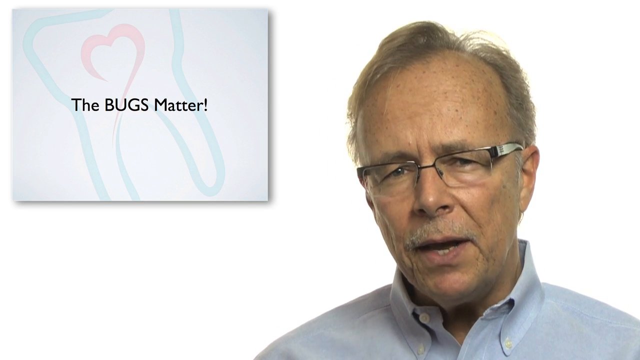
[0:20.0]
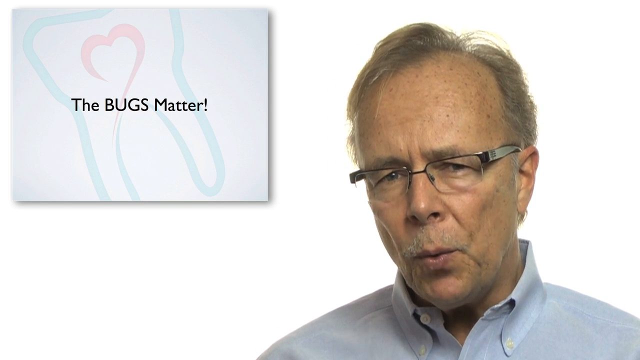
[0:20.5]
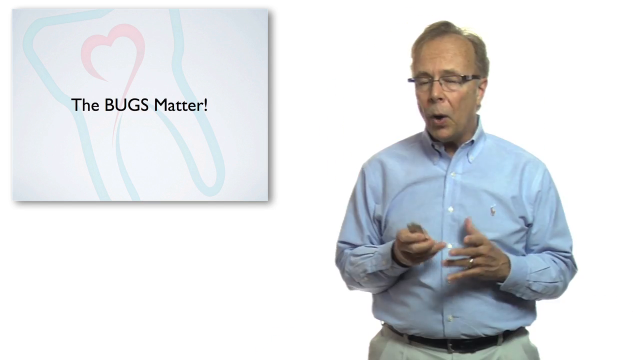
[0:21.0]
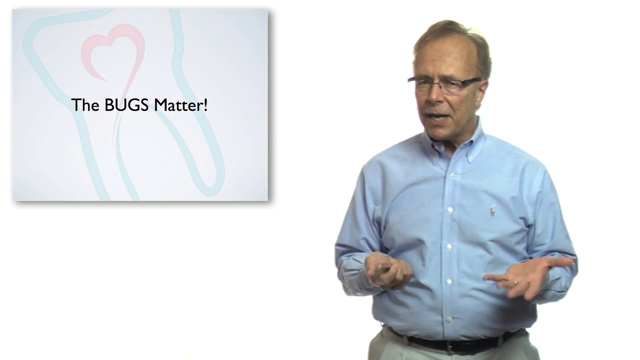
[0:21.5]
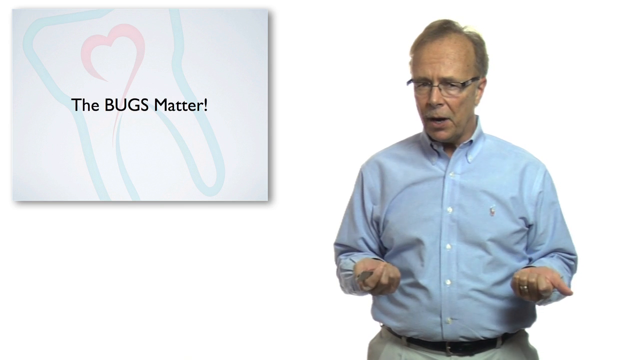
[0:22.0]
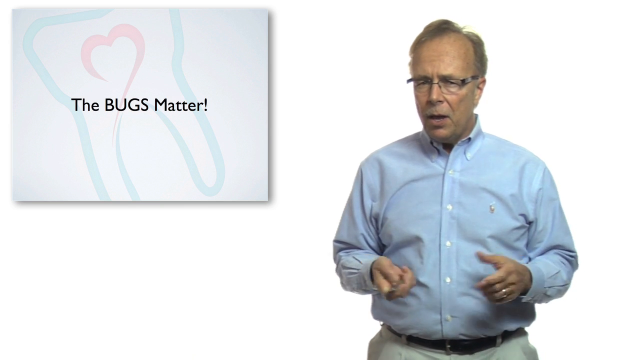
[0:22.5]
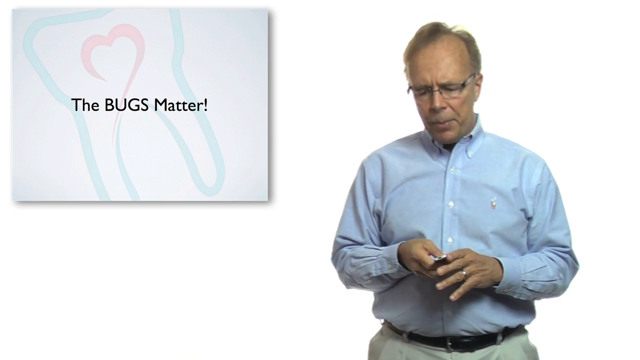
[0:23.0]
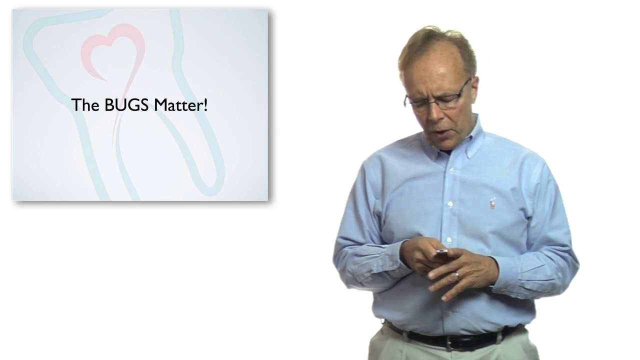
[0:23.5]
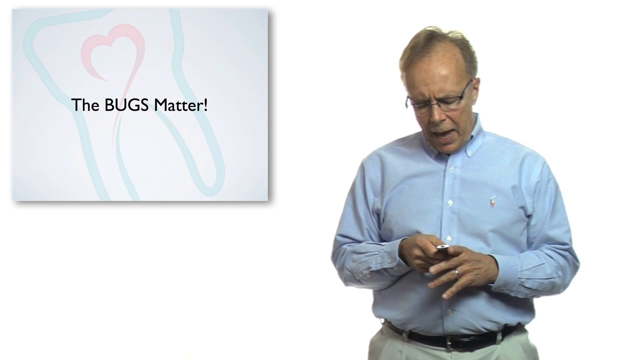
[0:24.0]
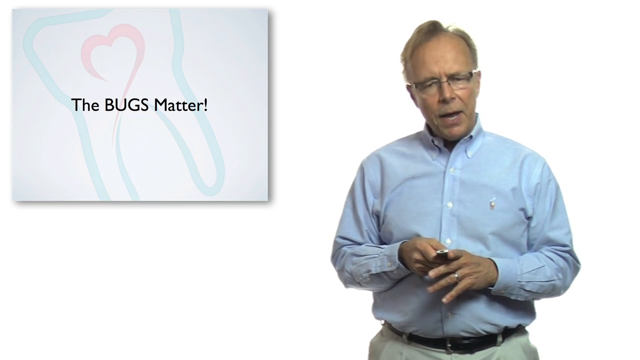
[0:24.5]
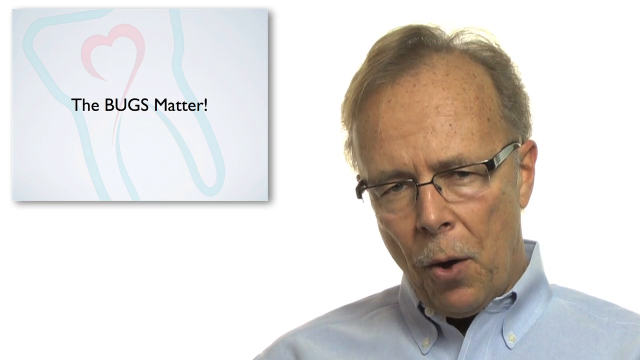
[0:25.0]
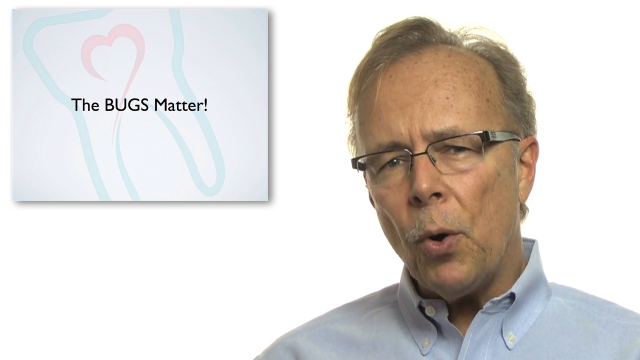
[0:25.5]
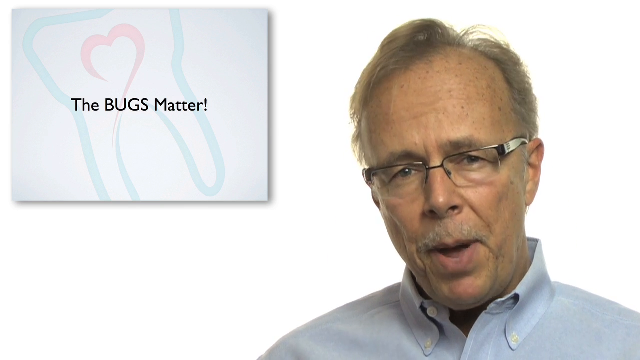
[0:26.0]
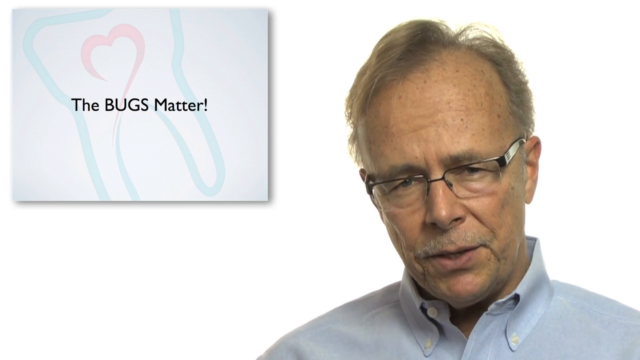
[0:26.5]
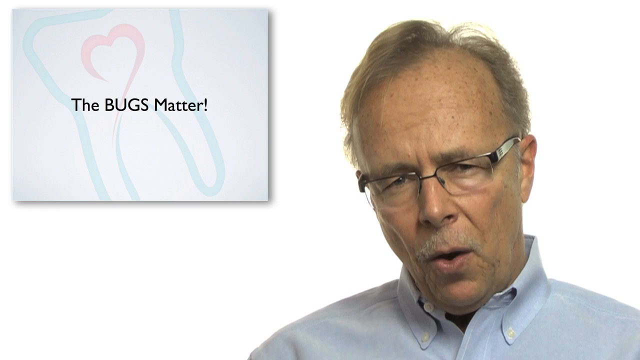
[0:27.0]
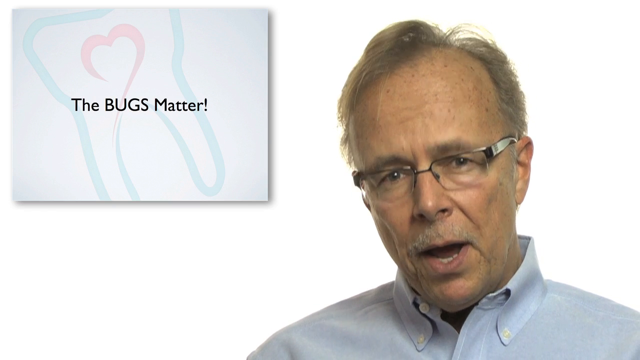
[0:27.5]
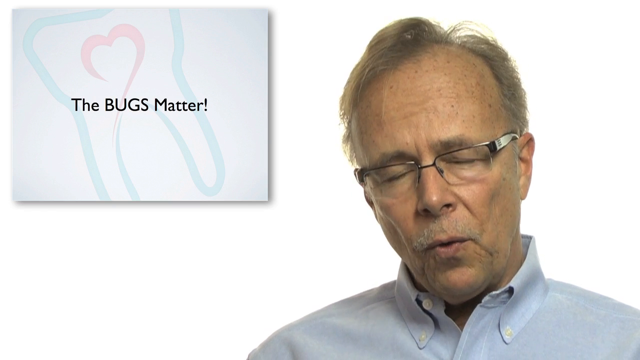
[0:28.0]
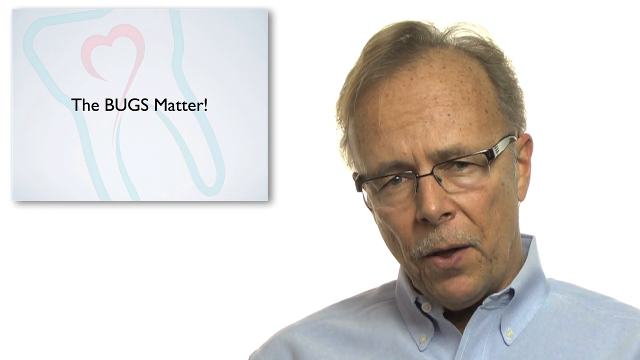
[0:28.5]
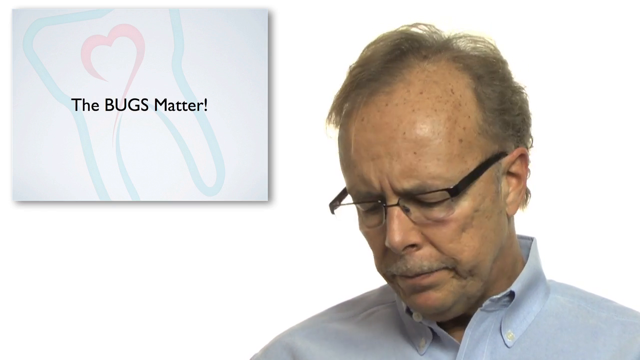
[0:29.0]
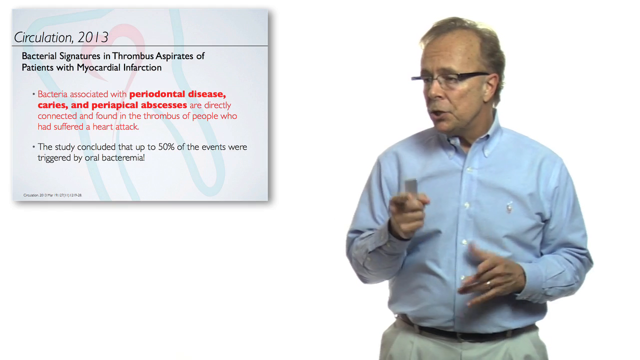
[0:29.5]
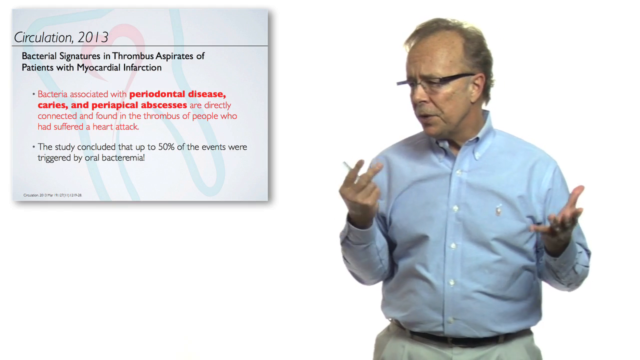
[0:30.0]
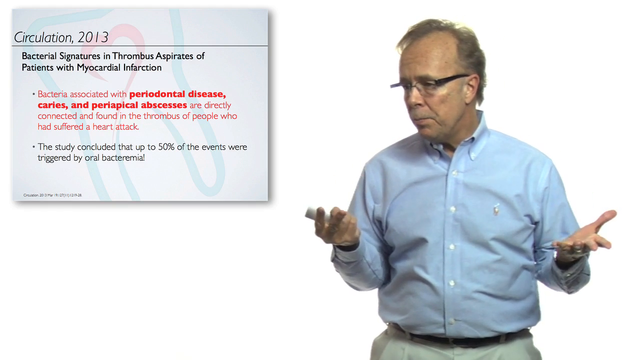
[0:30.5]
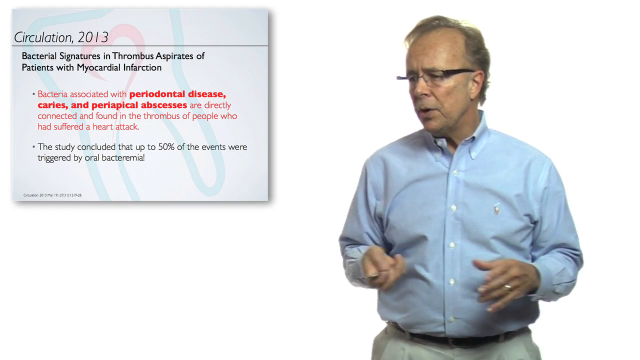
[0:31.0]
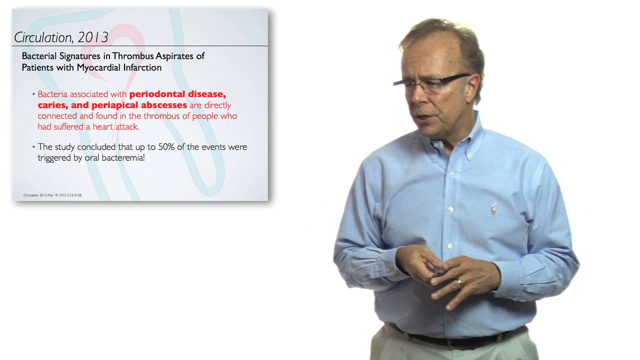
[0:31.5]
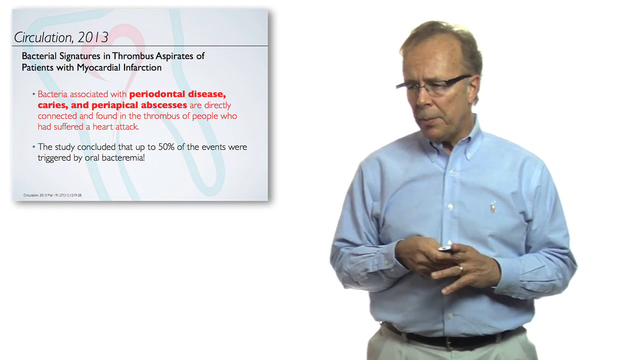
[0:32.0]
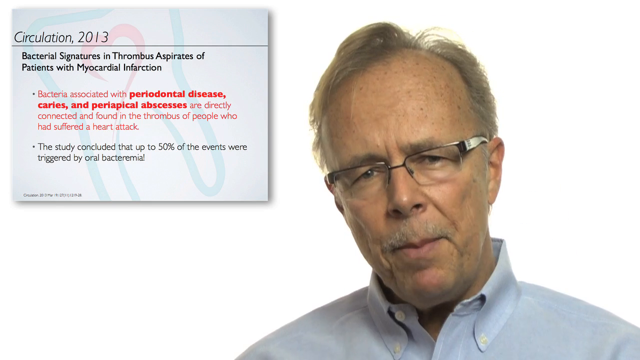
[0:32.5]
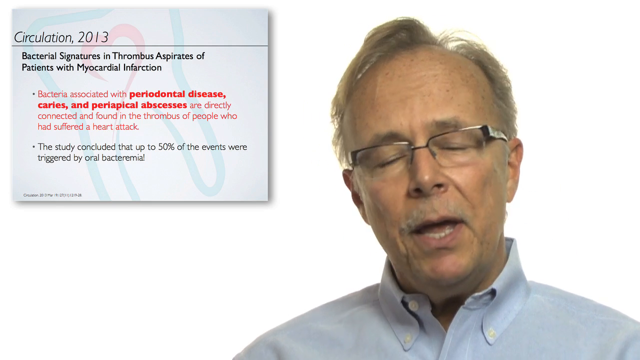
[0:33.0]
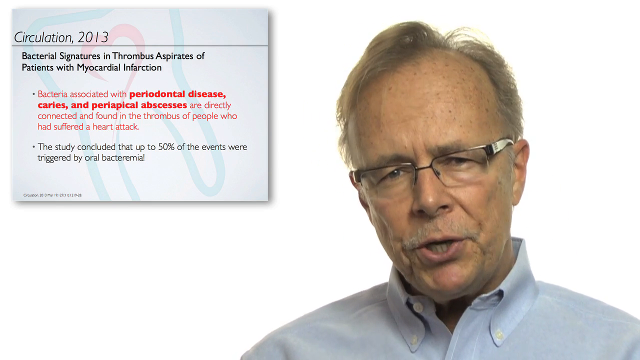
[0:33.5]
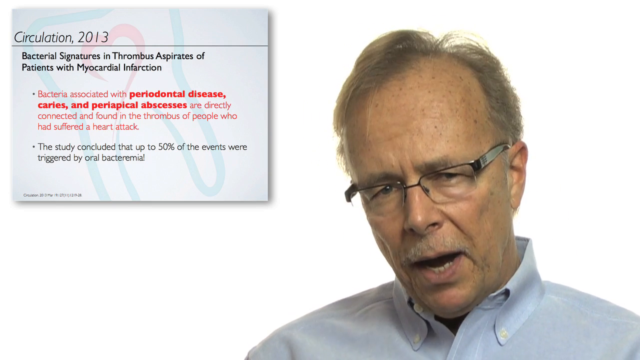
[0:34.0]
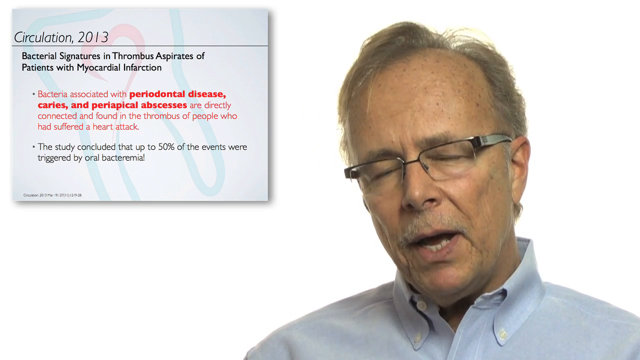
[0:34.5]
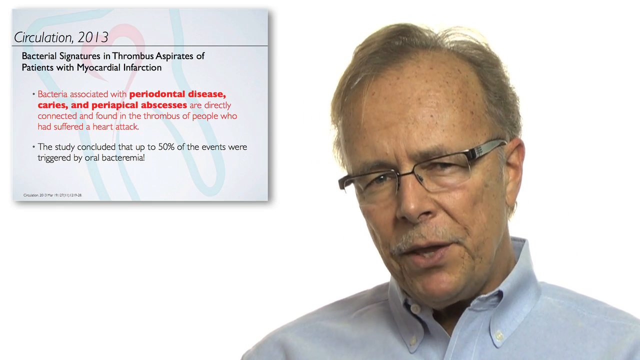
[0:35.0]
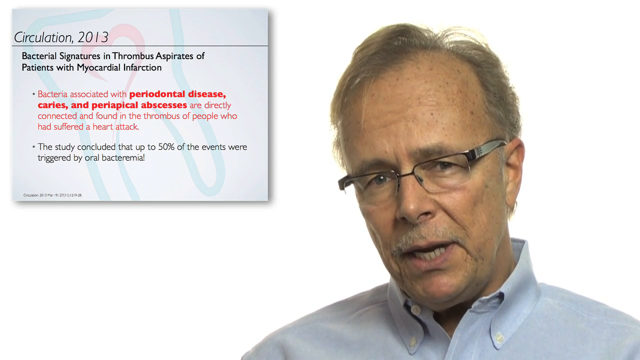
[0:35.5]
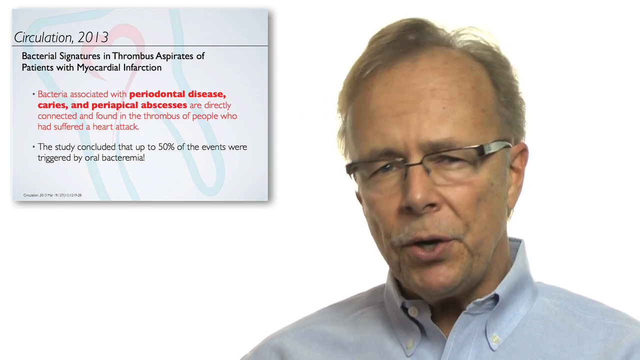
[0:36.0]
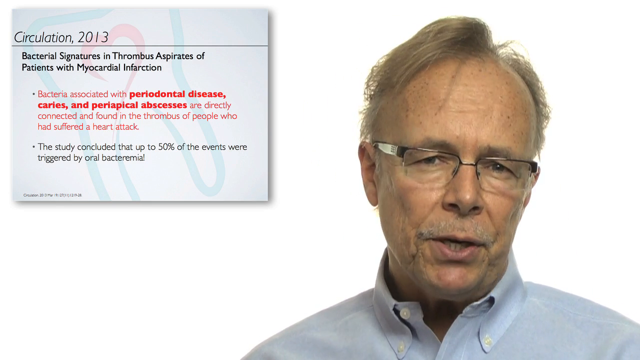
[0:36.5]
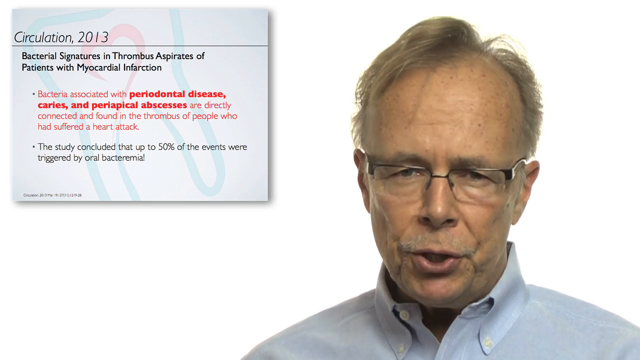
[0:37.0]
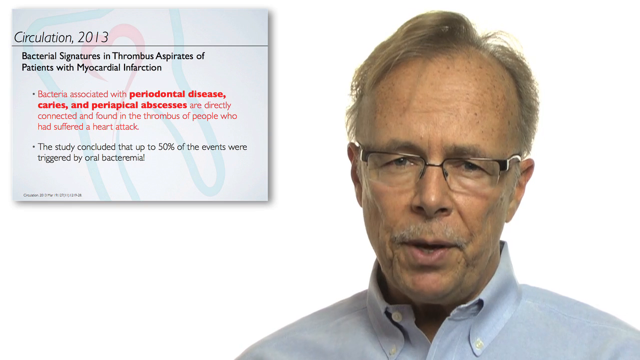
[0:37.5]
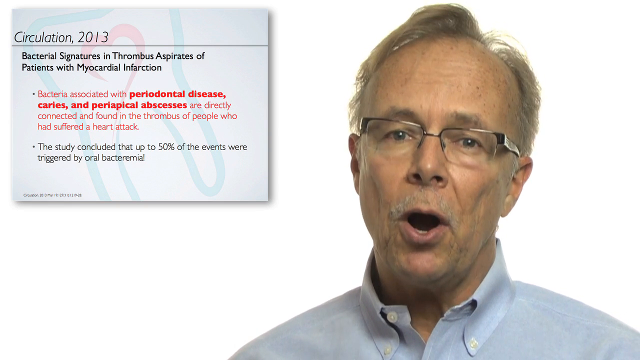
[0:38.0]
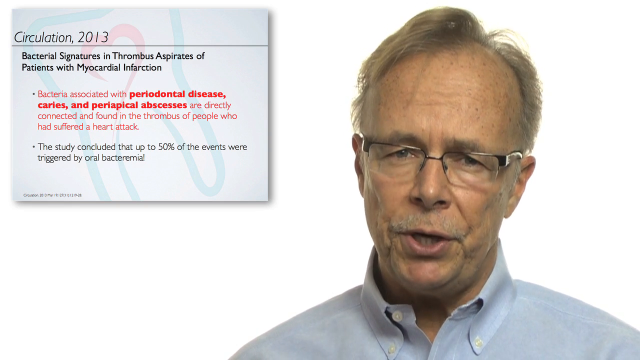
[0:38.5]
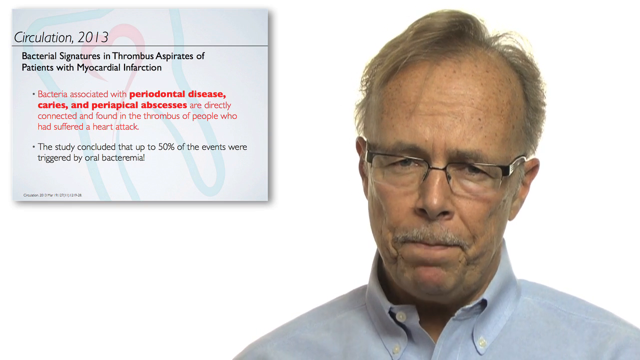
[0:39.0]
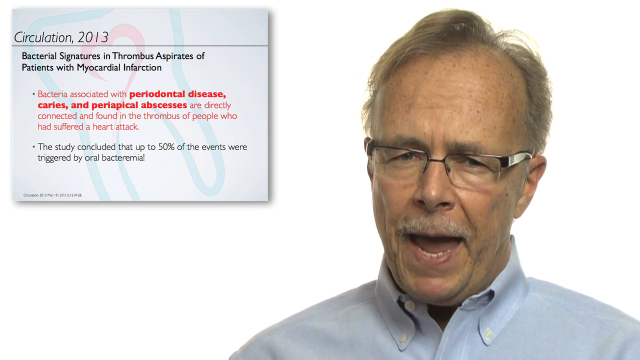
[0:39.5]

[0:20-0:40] The man continues to talk while standing, using both of his hands to express himself. In his right hand he holds an object that appears to be a laser pointer. In the top left corner there is something like a slide that reads "circulation 2013 bacterial signatures in thrombus aspirates of patients with myocardial infraction." It has two bullet points; all the text is in black except the words of the first bullet point, which are in red. The first bullet reads "Bacteria associated with periodontal disease caries and periapical abscesses are directly connected and found in the thrombus of people who have suffered a heart attack." The second reads "The study concluded up to 50 percent of the events were triggered by oral bacteria!" At the very bottom of the slide is small writing that looks like a source.